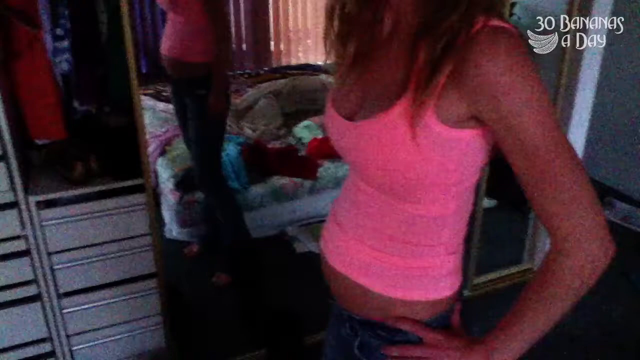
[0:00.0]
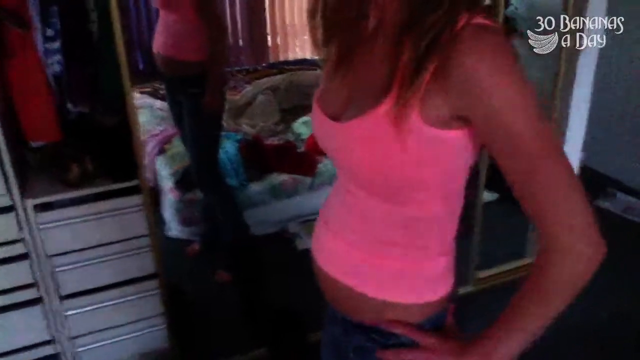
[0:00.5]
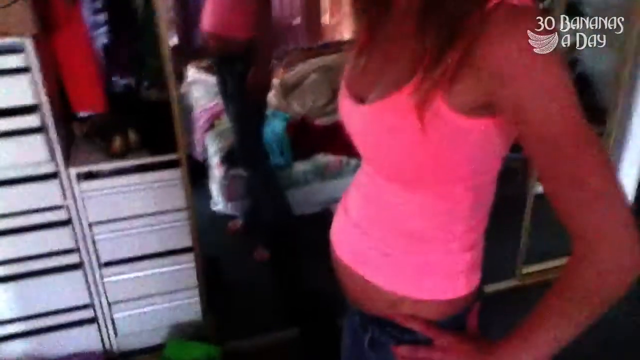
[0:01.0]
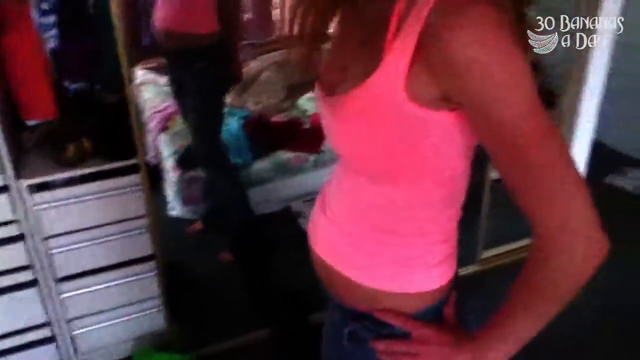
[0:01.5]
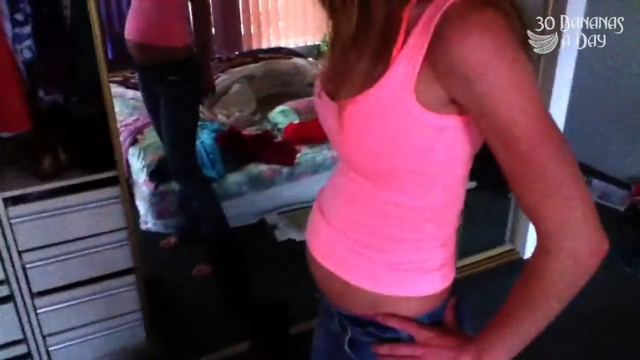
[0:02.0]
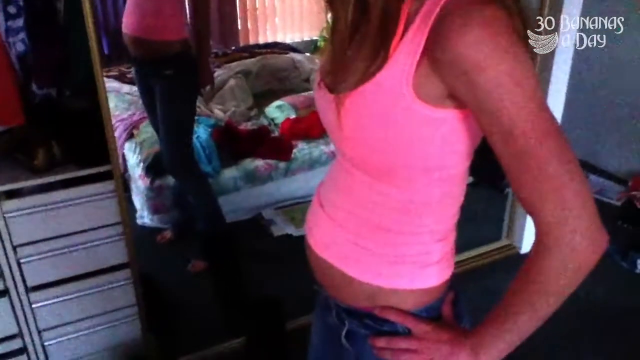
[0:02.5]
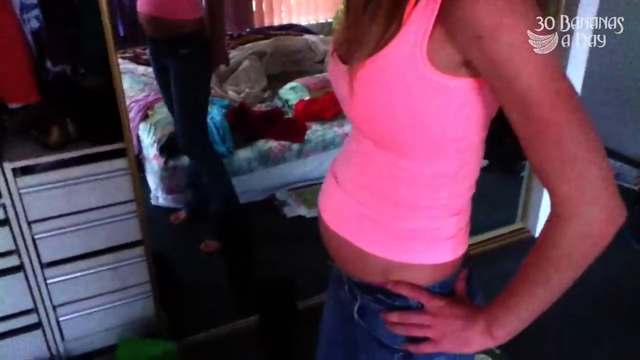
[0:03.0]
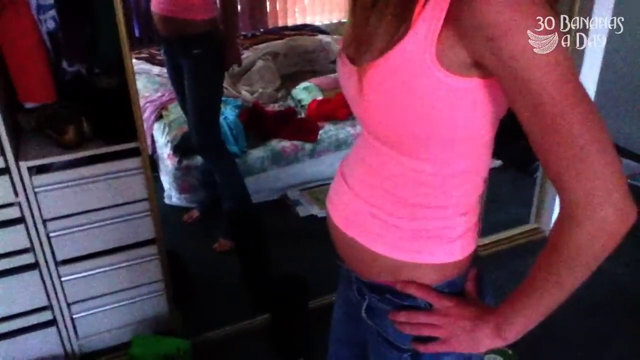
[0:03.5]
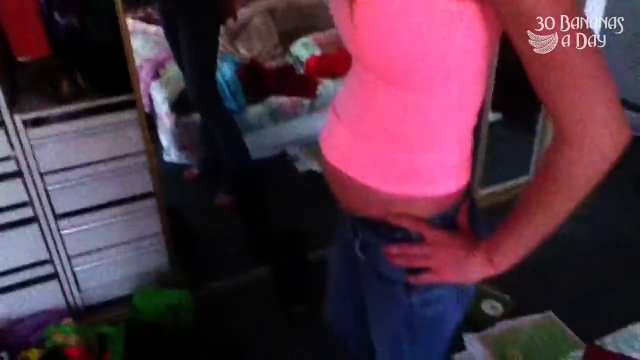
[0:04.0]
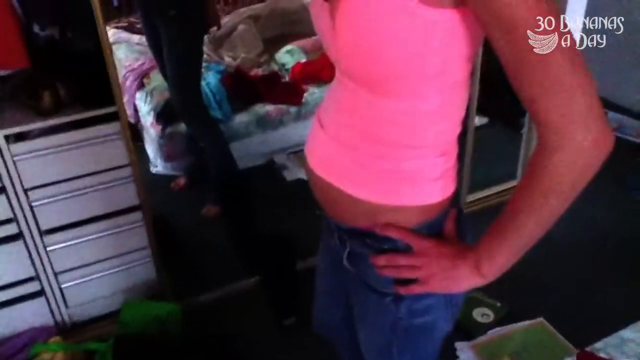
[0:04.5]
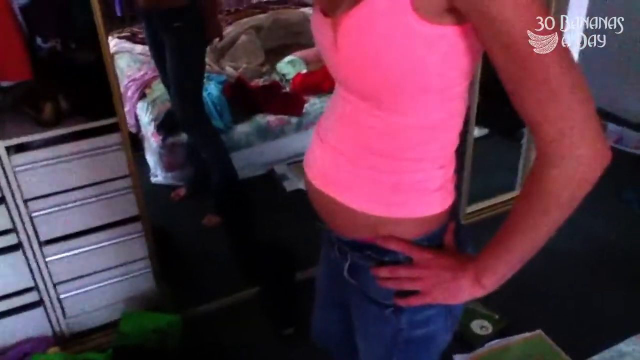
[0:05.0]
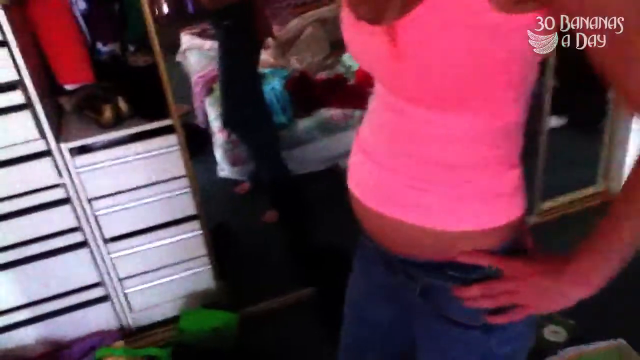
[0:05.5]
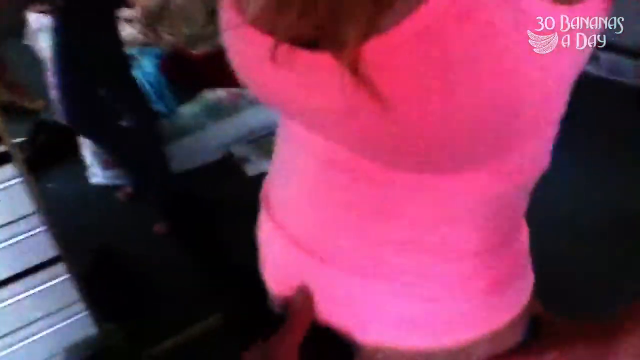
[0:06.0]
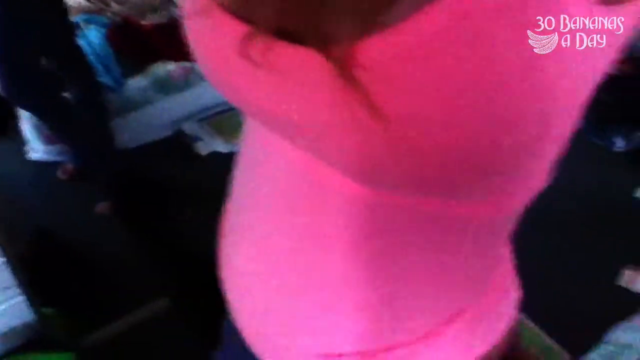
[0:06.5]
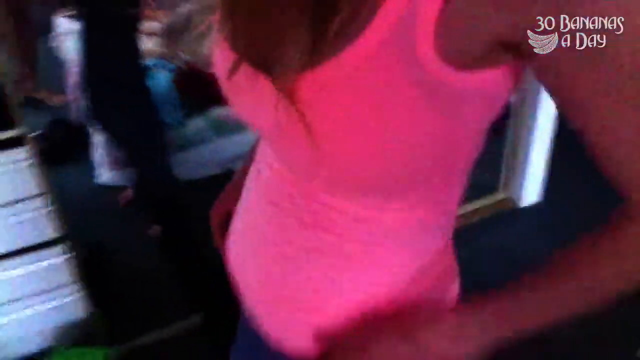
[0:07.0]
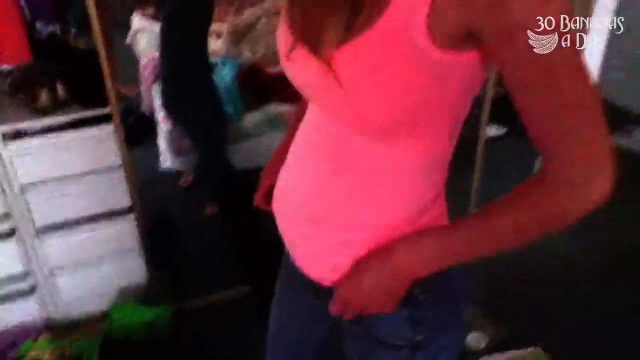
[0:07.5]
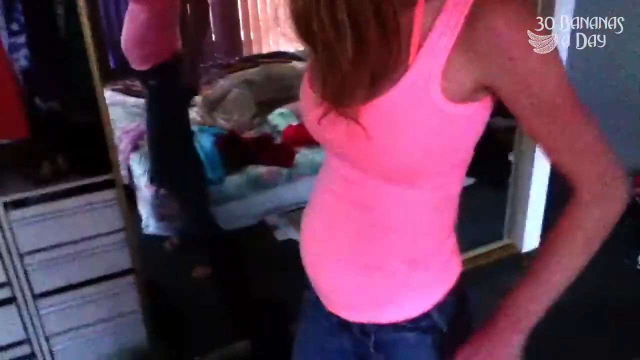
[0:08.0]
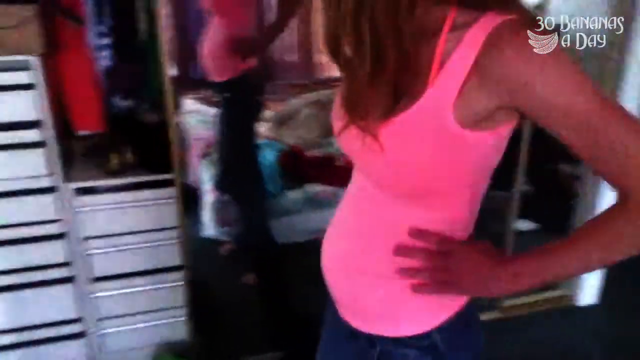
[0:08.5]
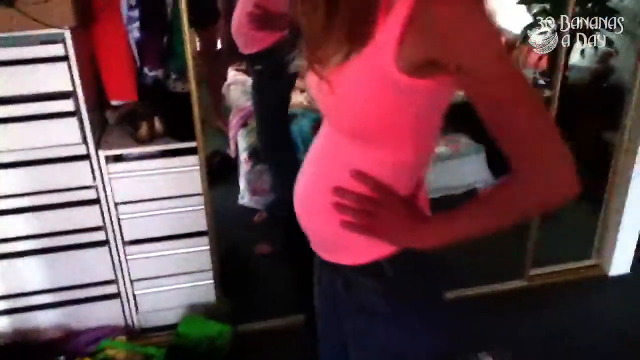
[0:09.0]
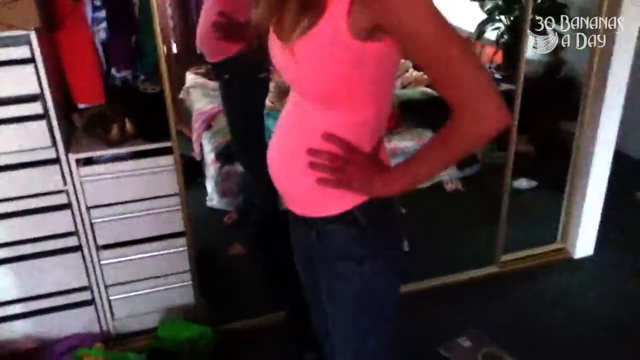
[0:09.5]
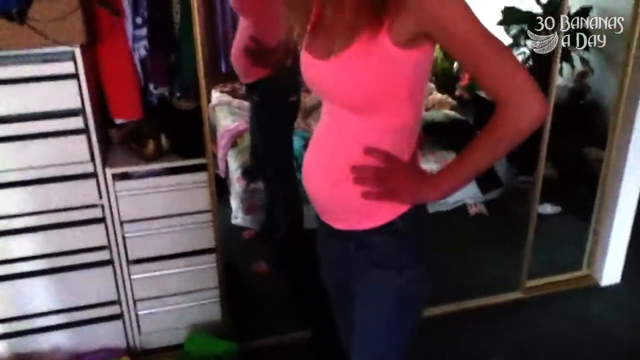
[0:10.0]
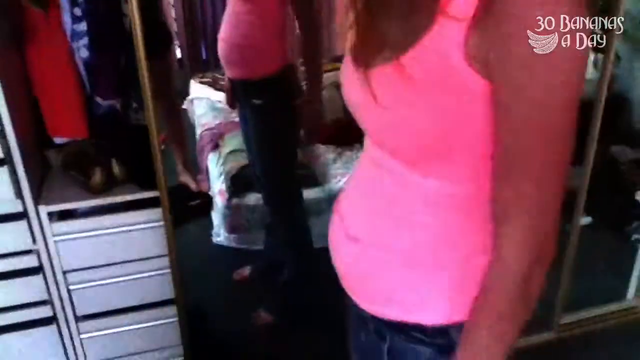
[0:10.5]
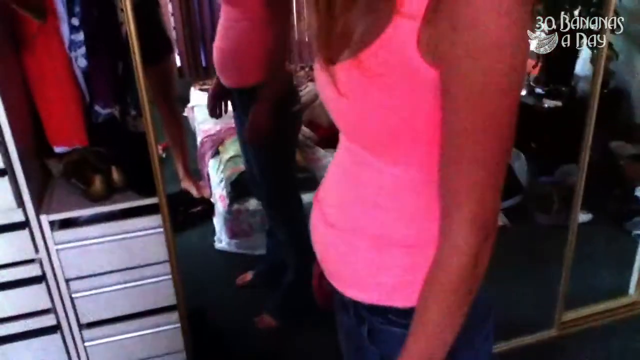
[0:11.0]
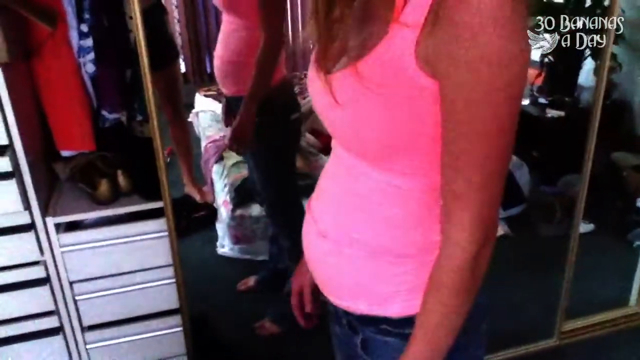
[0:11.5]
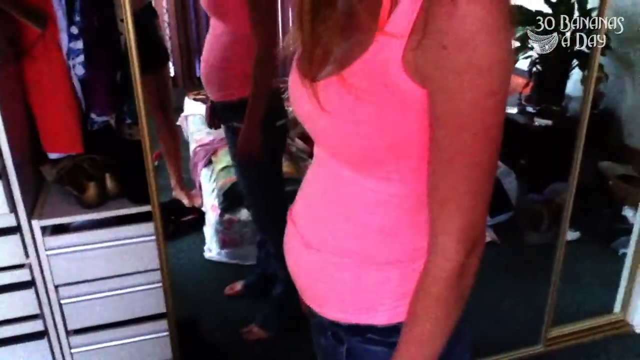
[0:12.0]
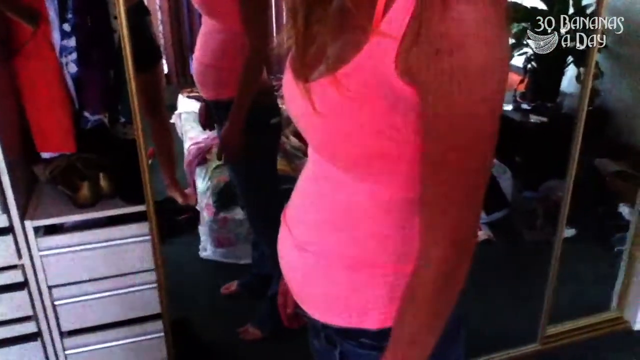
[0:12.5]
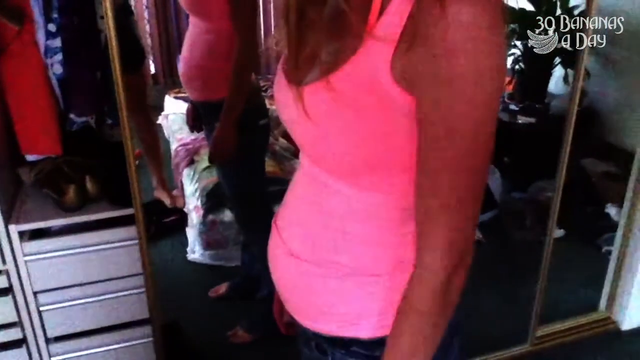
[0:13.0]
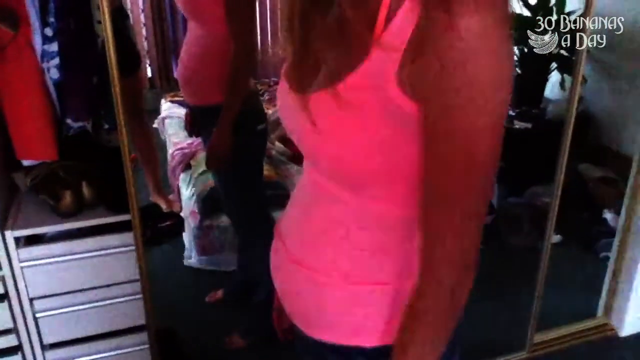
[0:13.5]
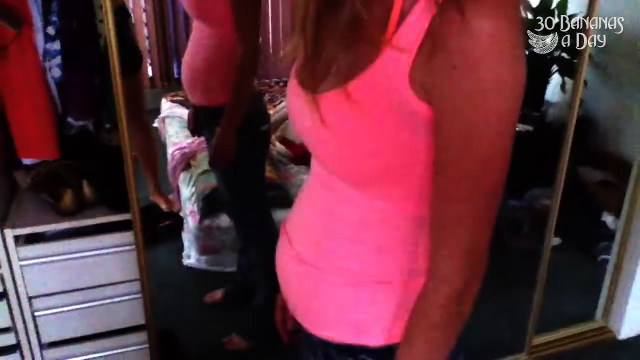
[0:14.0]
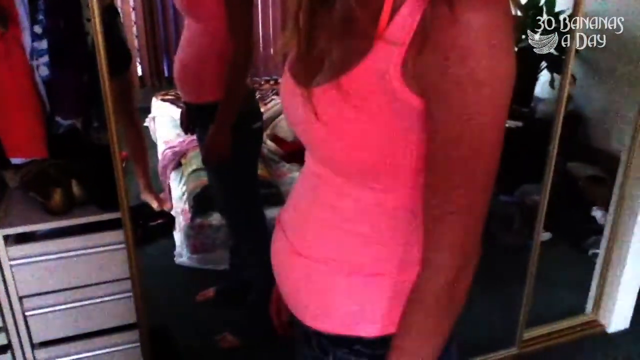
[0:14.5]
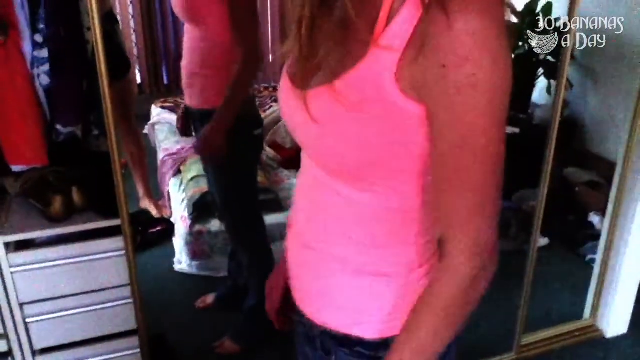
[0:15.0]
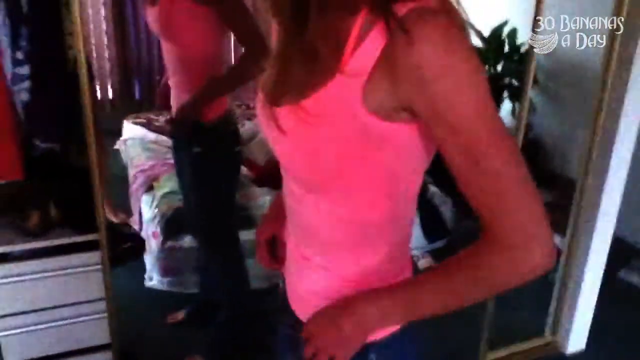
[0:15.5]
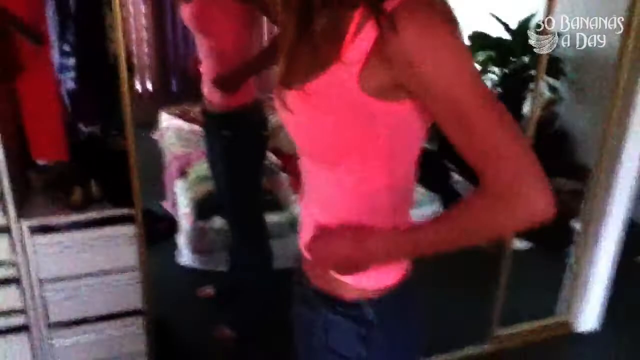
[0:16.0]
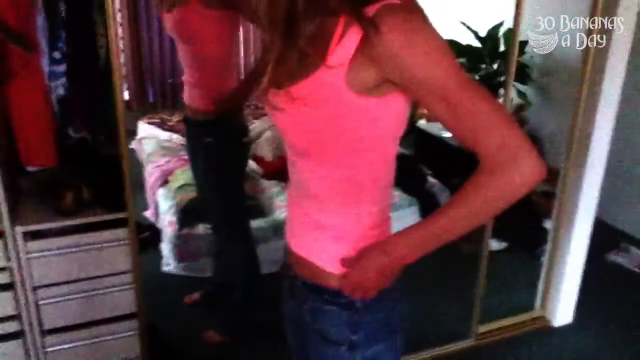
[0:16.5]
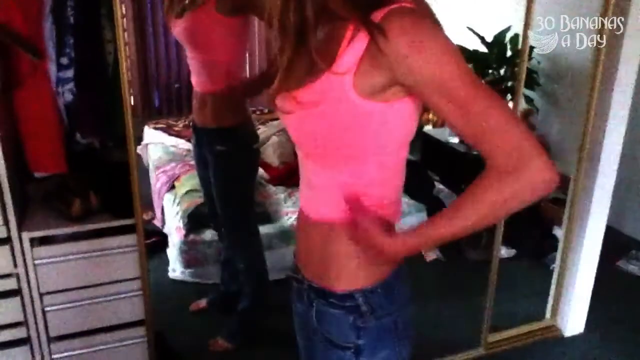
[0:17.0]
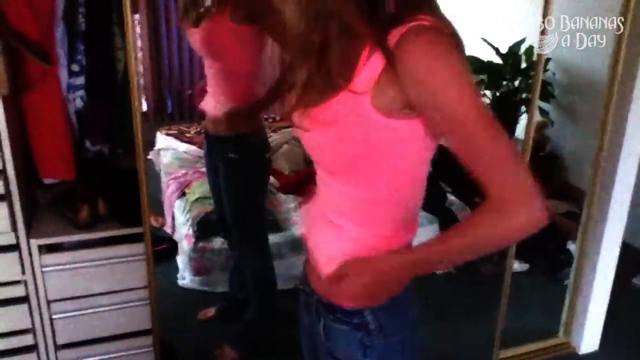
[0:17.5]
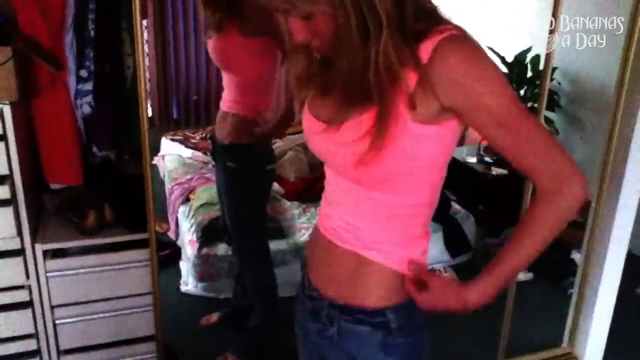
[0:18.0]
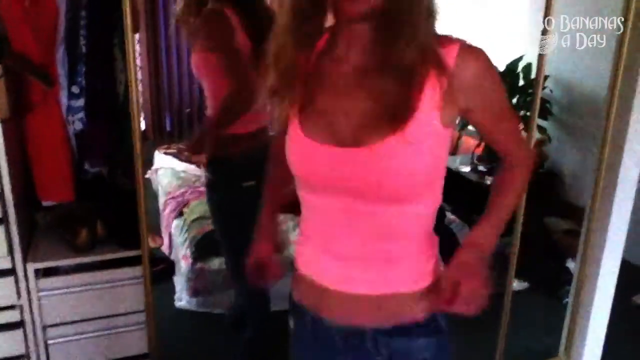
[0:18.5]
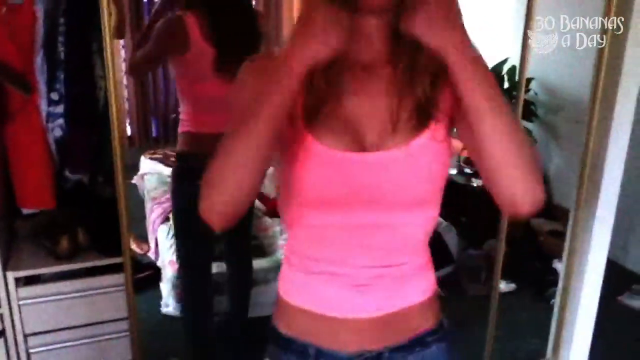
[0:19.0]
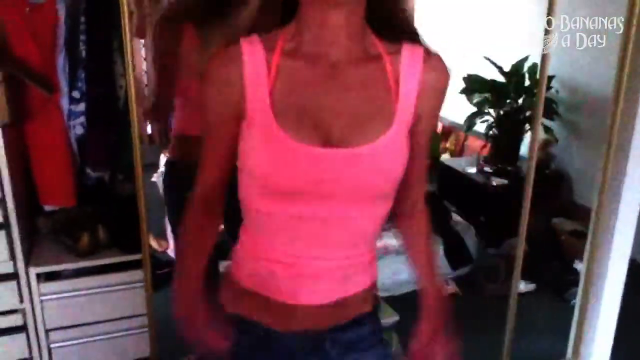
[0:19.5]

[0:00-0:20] A white woman on the right side of the frame wears a pink crop top and has somewhat long brown hair. White text in the top right reads "30 bananas", with an image of three bananas, and "a day". A mirror on the left reflects her, her very messy bed, and gray blinds in the background. The video is very grainy; there appears to be a blue carpet, with white drawers on the left side. She also seems to be wearing blue jeans, and in the reflection a white person's leg in black shorts is visible. She faces the camera and lifts her top up a bit. The video appears to be taken in the daytime, as some sunlight comes through the closed blinds, and it was most likely shot in a bedroom.